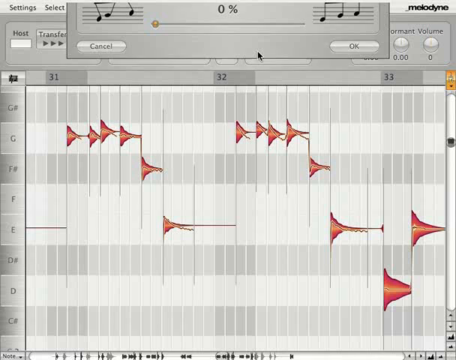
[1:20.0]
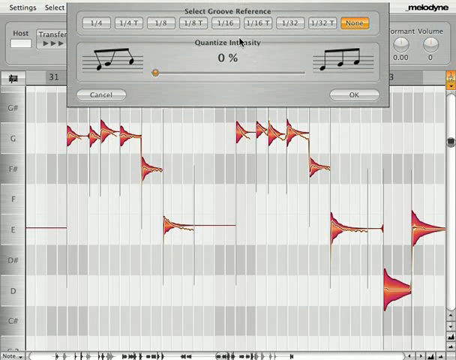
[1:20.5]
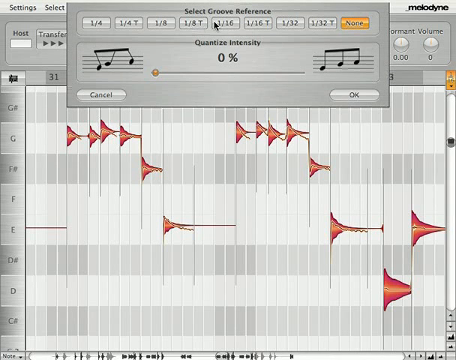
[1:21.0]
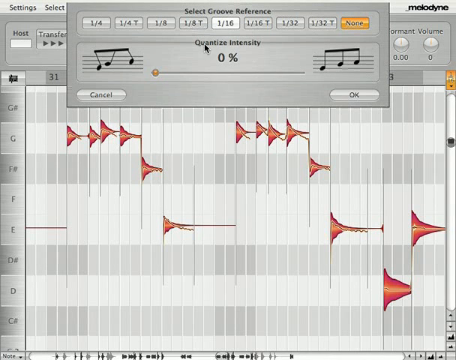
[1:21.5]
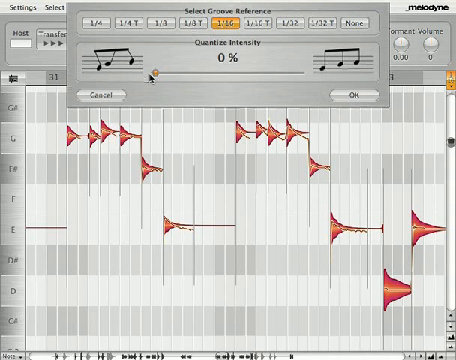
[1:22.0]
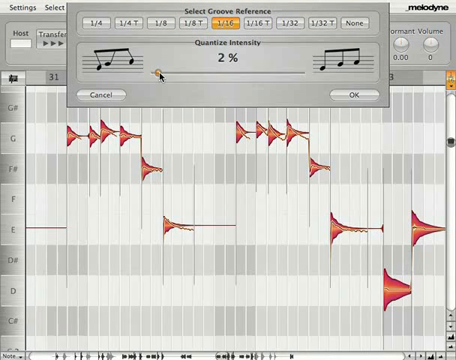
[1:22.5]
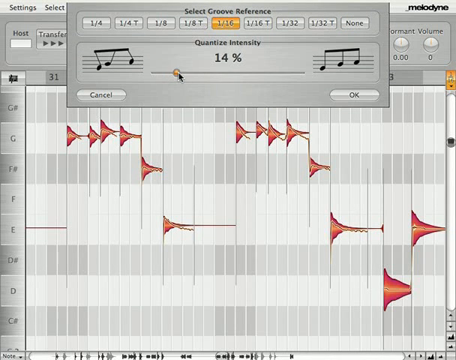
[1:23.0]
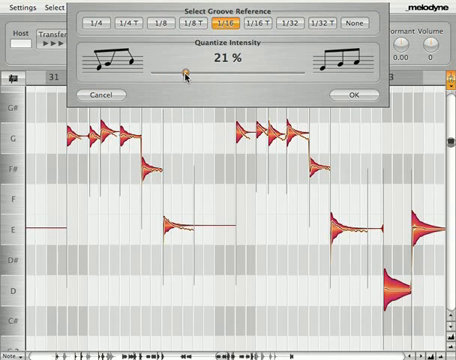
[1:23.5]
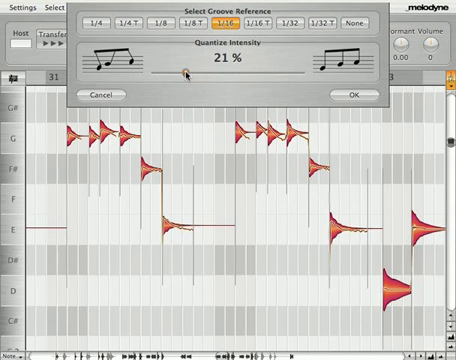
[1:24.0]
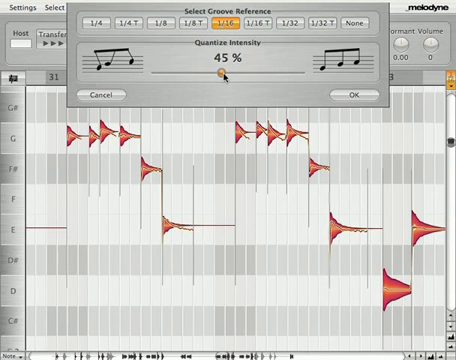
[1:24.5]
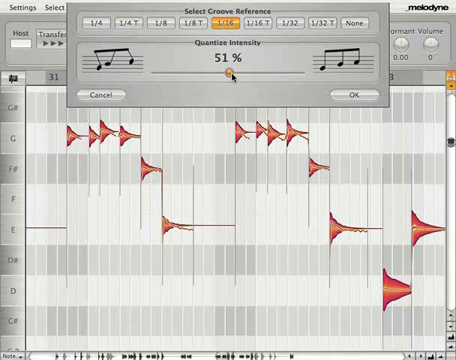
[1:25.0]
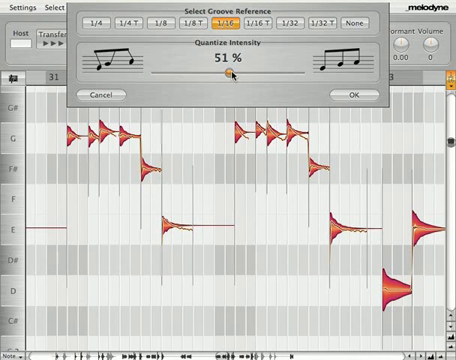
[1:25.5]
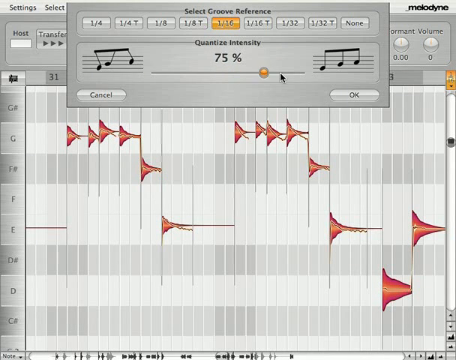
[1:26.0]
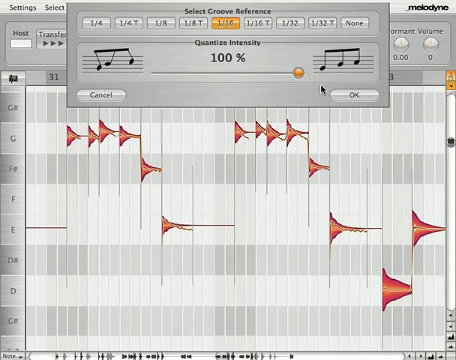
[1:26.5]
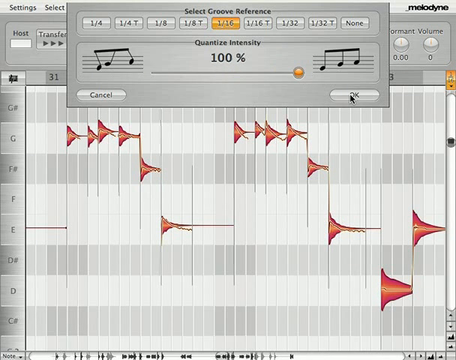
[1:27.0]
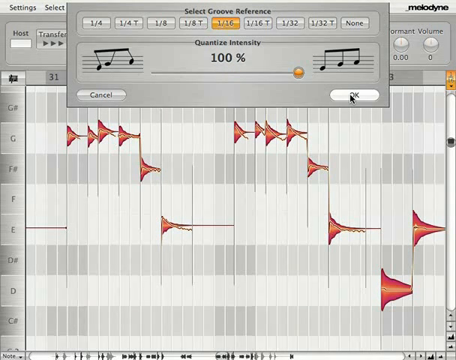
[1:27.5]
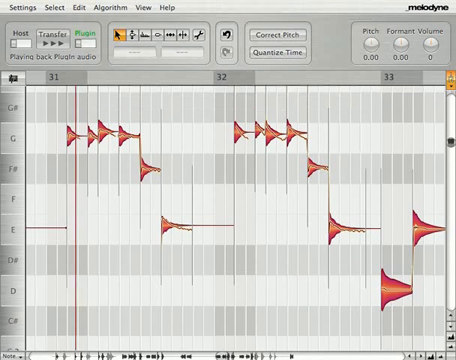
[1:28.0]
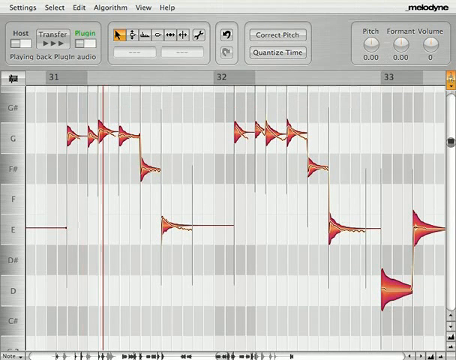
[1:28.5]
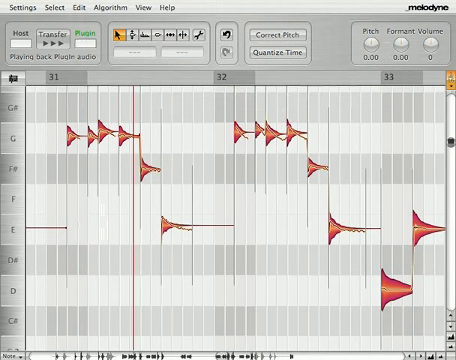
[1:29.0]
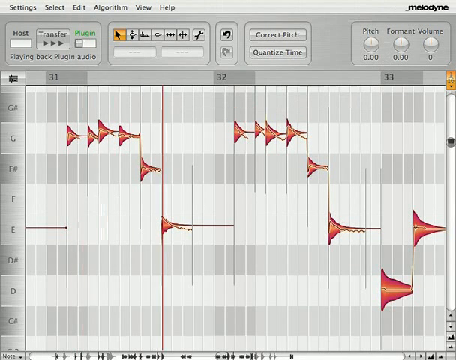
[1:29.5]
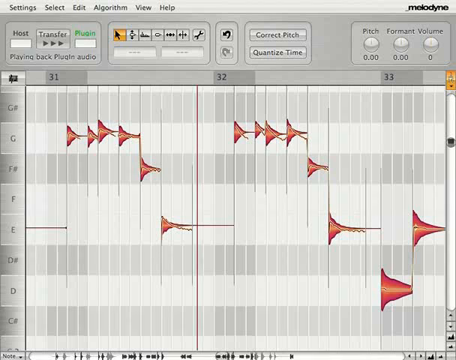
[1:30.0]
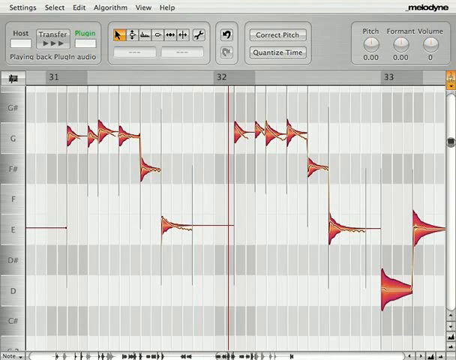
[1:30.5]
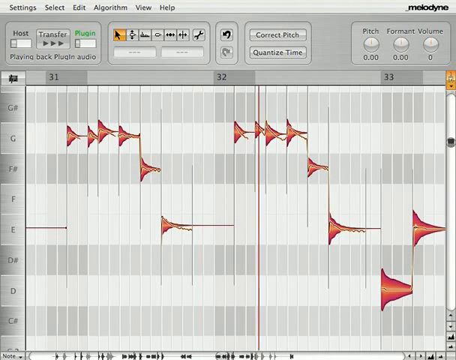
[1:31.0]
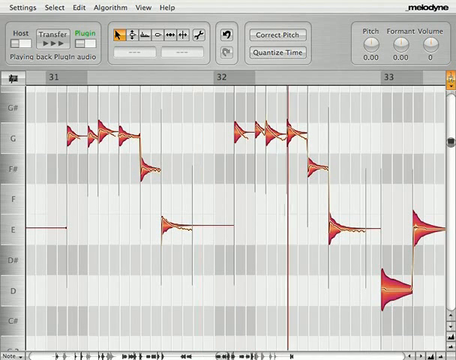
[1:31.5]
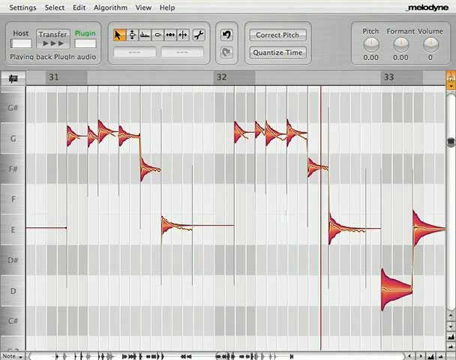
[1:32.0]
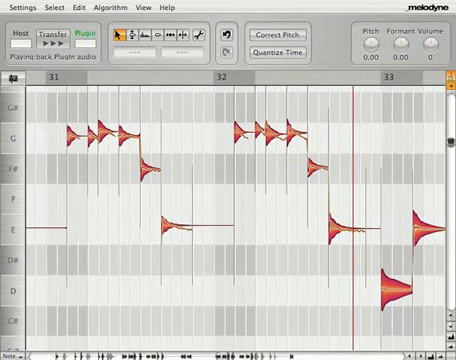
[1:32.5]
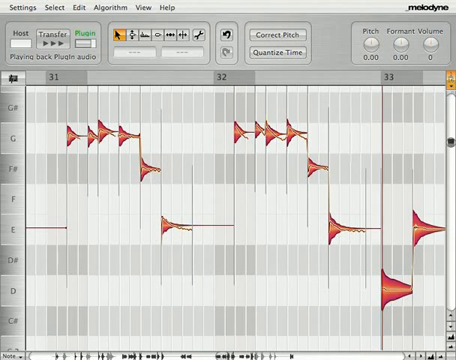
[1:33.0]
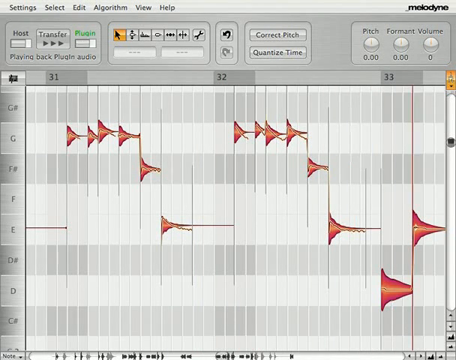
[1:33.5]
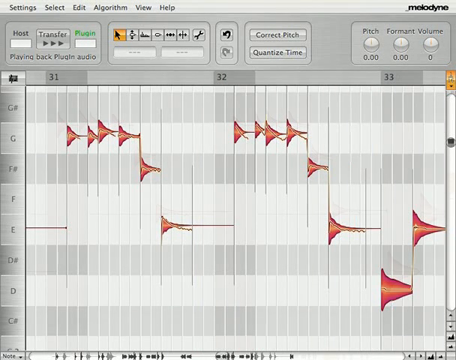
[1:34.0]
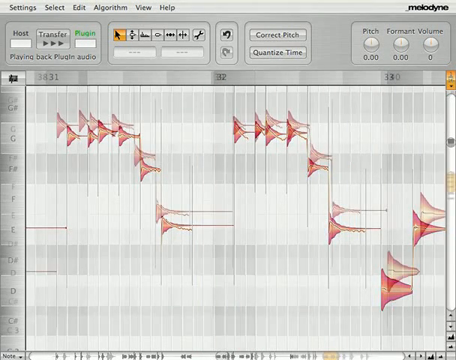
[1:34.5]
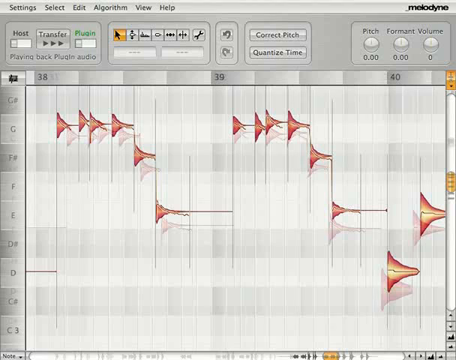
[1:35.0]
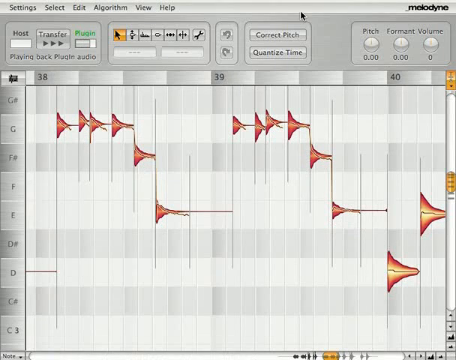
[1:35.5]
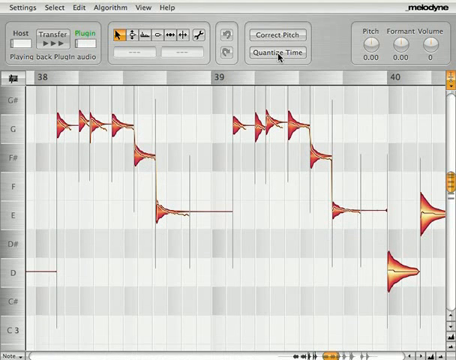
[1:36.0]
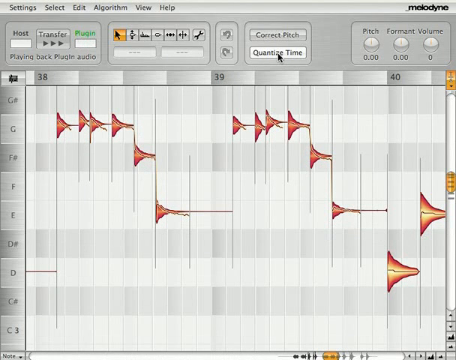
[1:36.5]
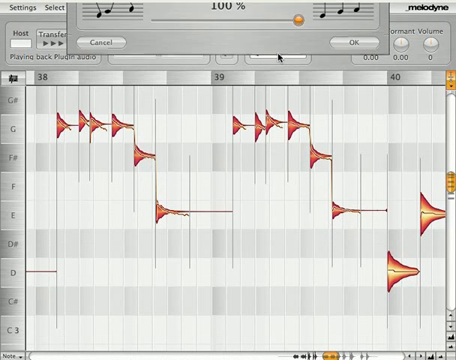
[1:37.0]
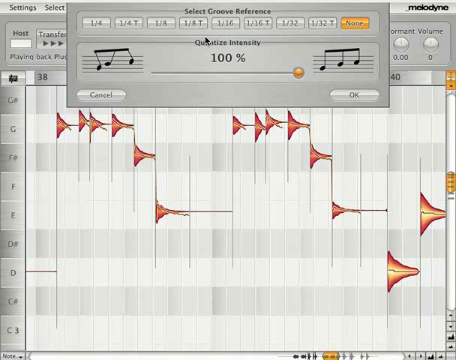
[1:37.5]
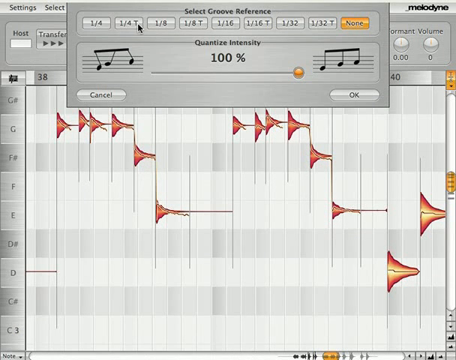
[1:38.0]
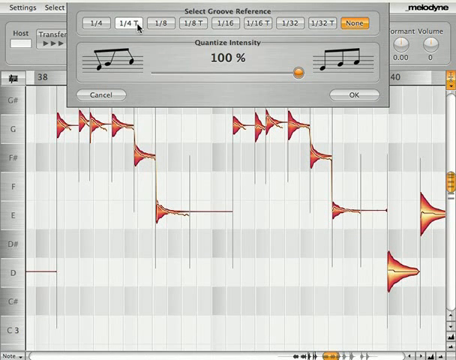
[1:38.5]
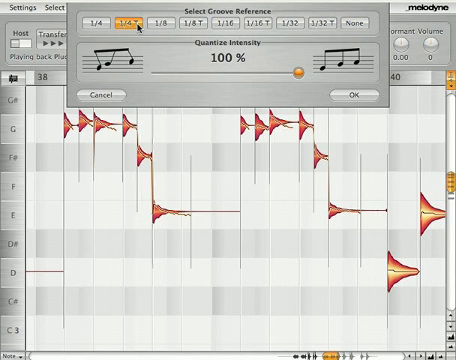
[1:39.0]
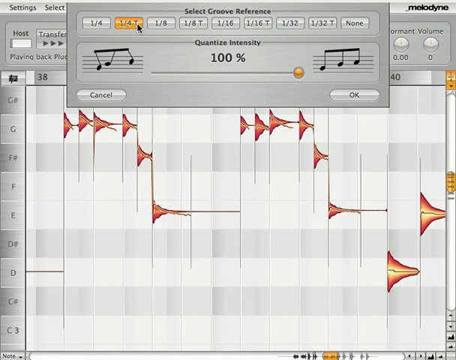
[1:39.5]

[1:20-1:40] Clicking the quantize time button brings up an intensity scale, currently at 14%. There is also a series of groove reference buttons with eight options: 1/4, 1/4 T, 1/8, 1/8 T, 1/16 (currently selected), 1/16 T, 1/32 and 1/32 T. The demonstrator increases the intensity all the way to 100%. The music goes beyond the 33rd second to about the 40th second, and the demonstrator clicks the quantize intensity button again, then moves to the groove reference button and changes it to 1/4 T.